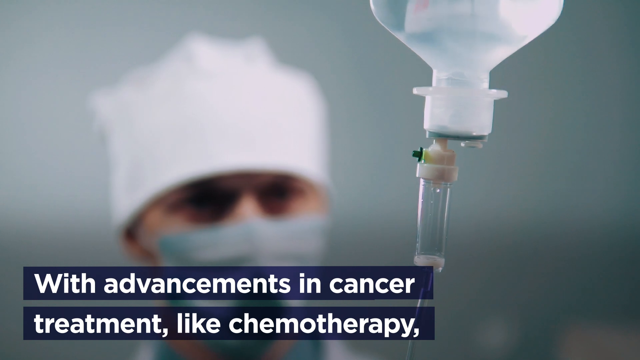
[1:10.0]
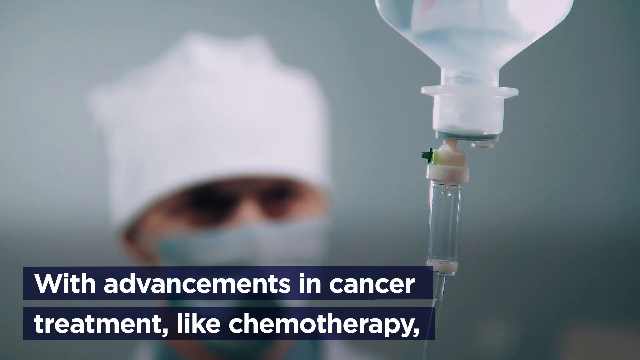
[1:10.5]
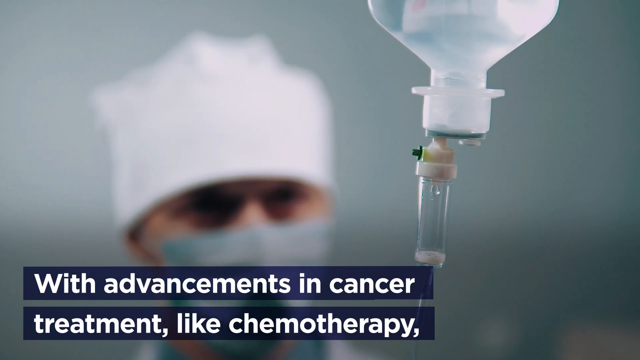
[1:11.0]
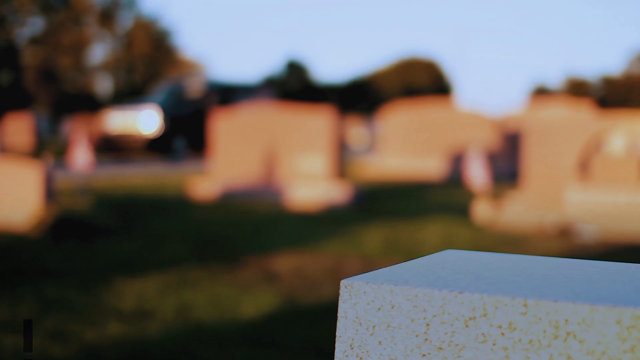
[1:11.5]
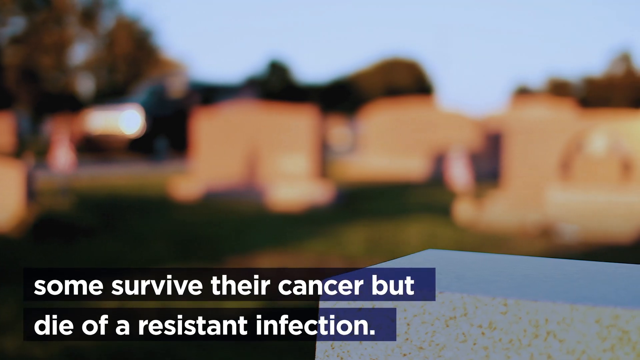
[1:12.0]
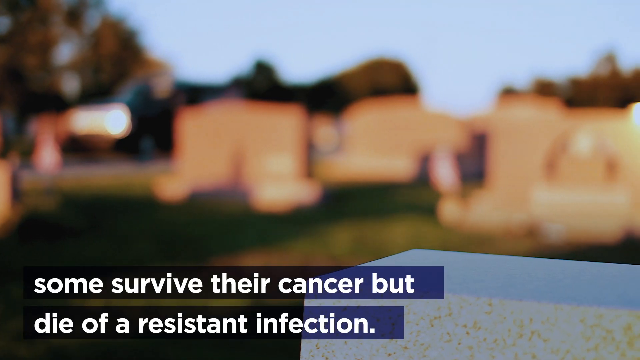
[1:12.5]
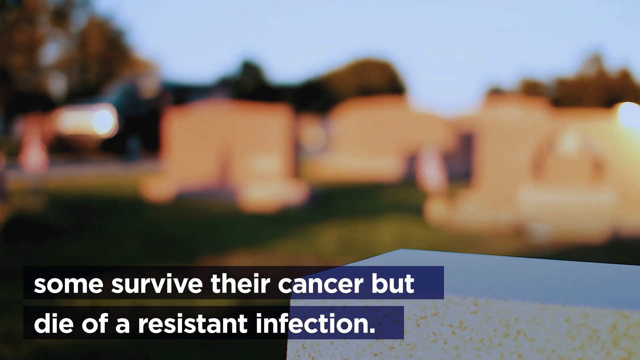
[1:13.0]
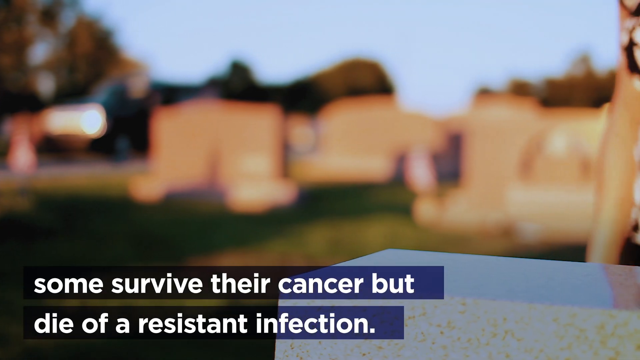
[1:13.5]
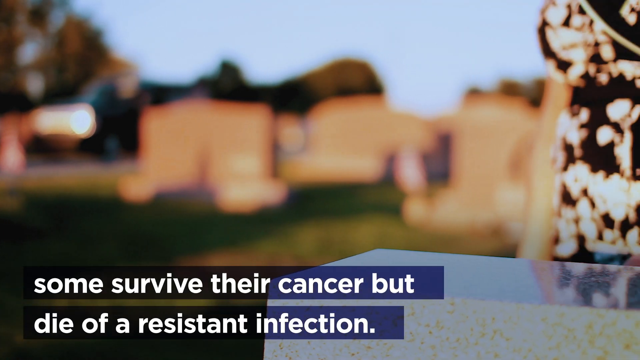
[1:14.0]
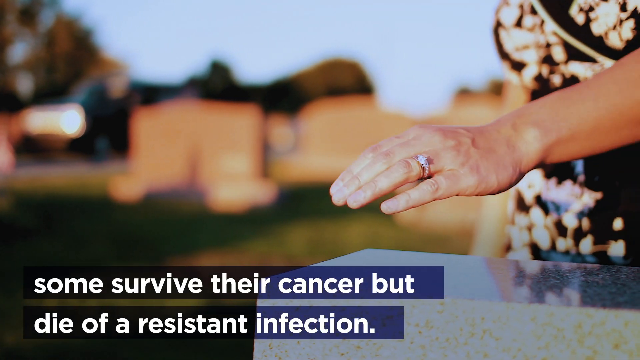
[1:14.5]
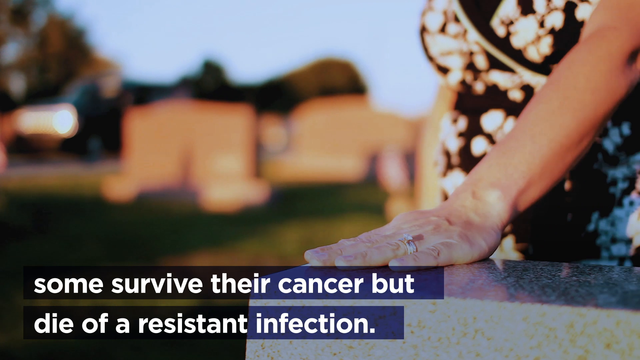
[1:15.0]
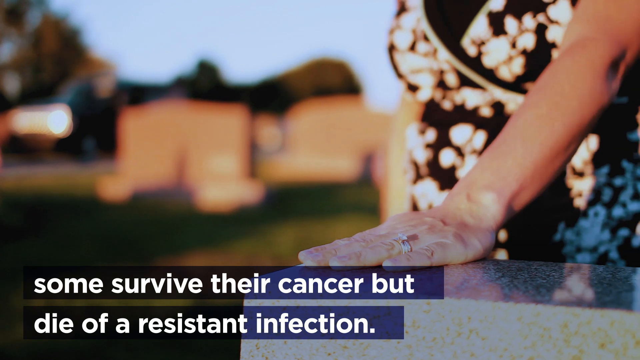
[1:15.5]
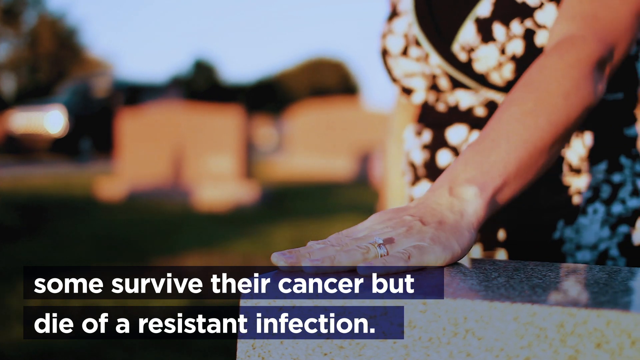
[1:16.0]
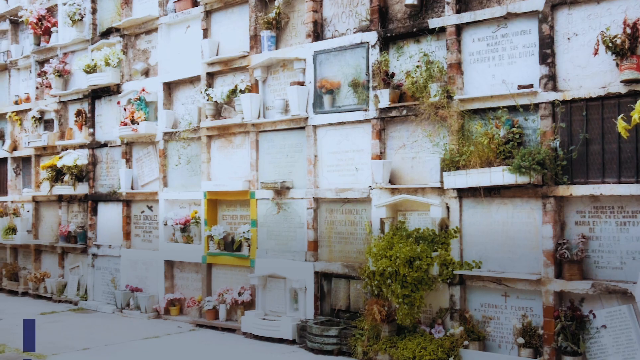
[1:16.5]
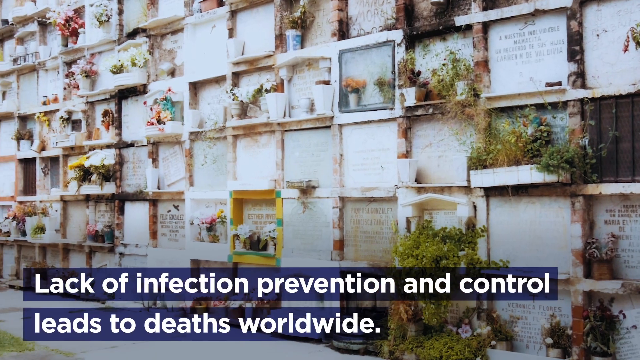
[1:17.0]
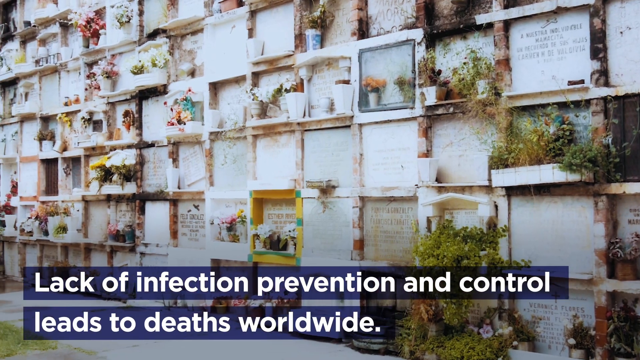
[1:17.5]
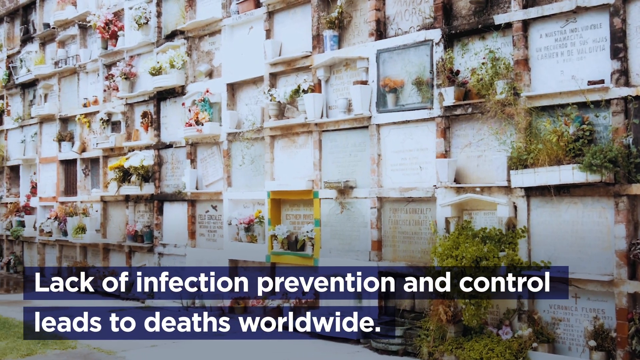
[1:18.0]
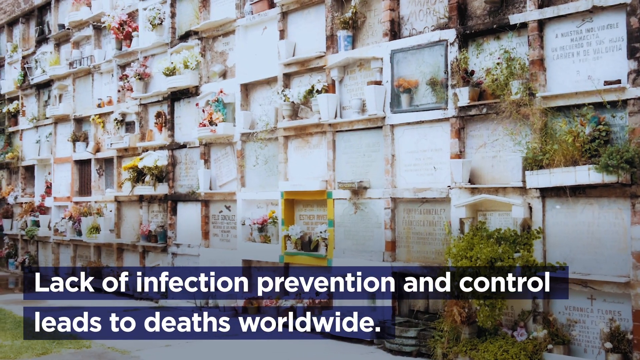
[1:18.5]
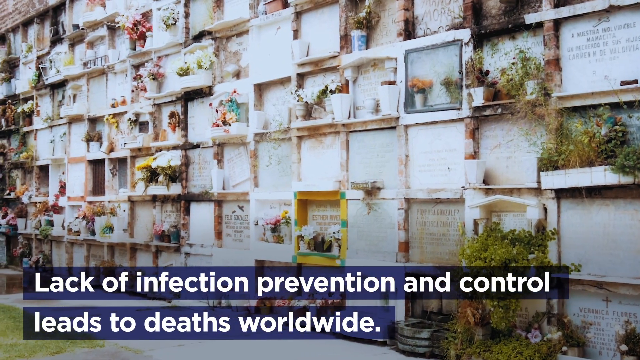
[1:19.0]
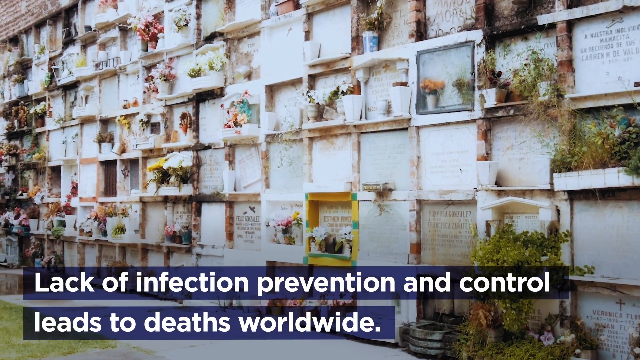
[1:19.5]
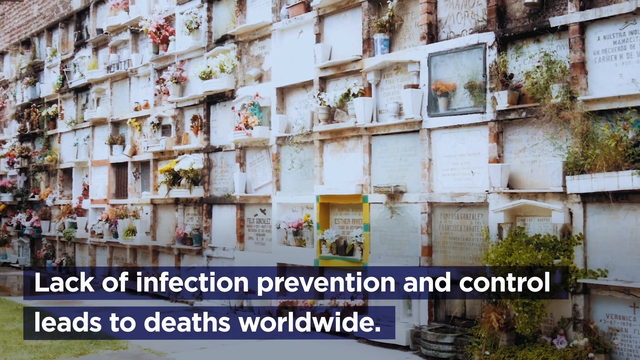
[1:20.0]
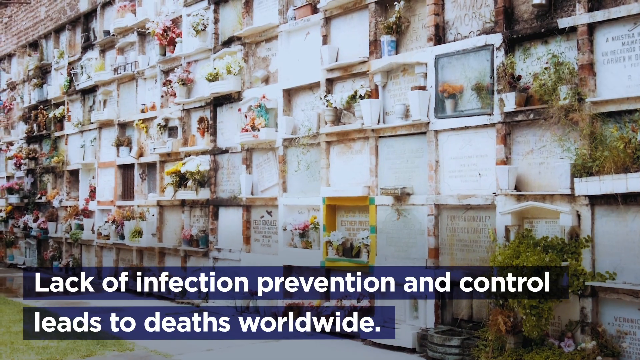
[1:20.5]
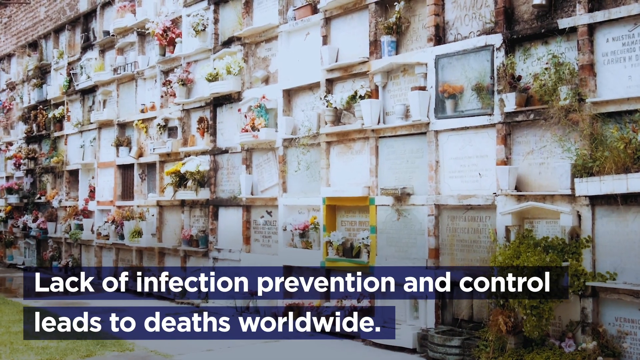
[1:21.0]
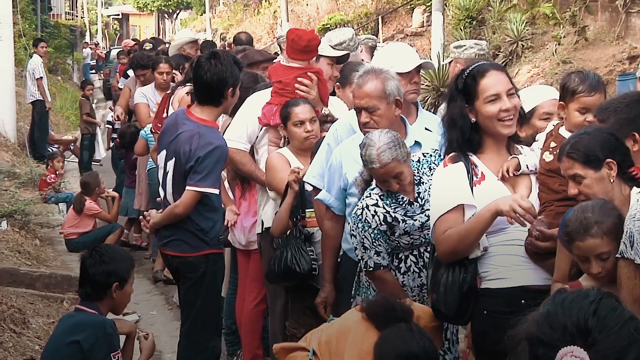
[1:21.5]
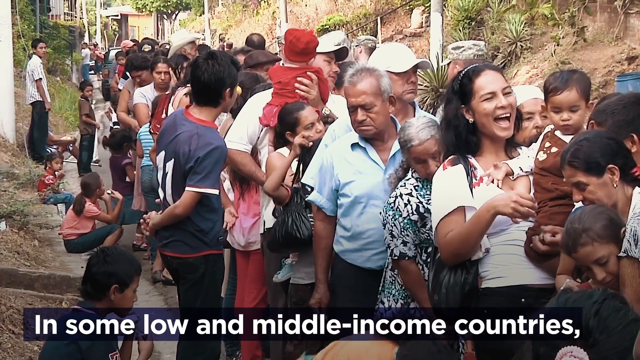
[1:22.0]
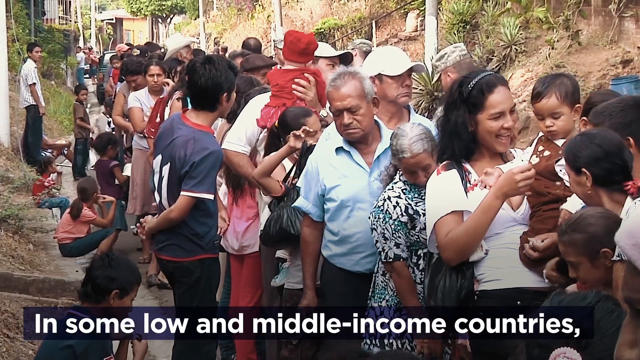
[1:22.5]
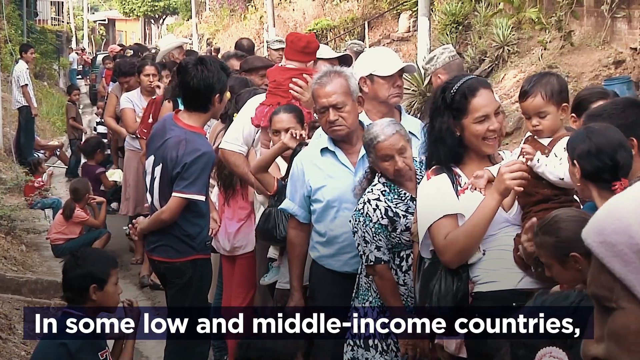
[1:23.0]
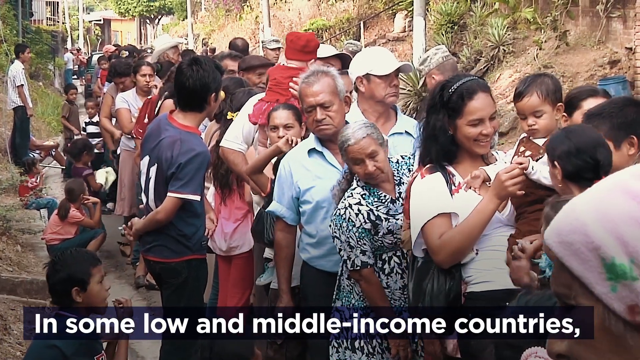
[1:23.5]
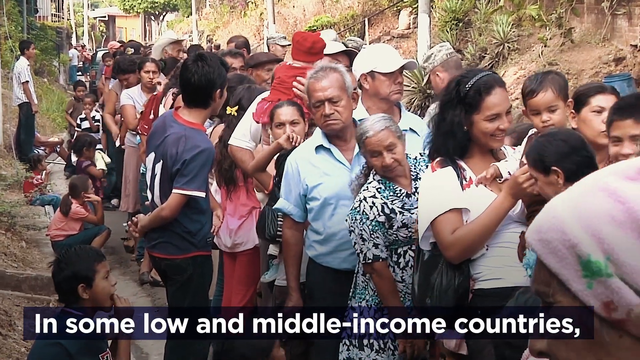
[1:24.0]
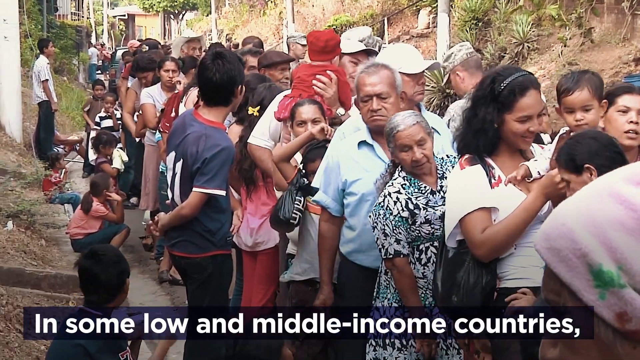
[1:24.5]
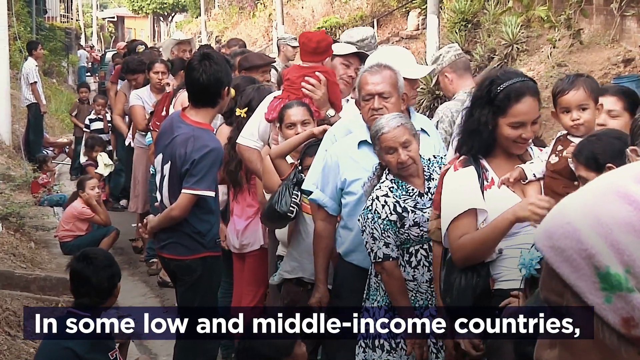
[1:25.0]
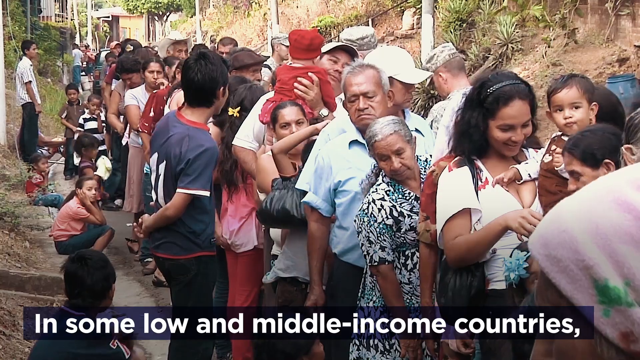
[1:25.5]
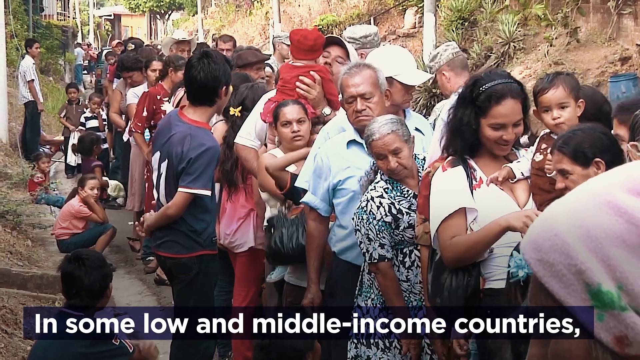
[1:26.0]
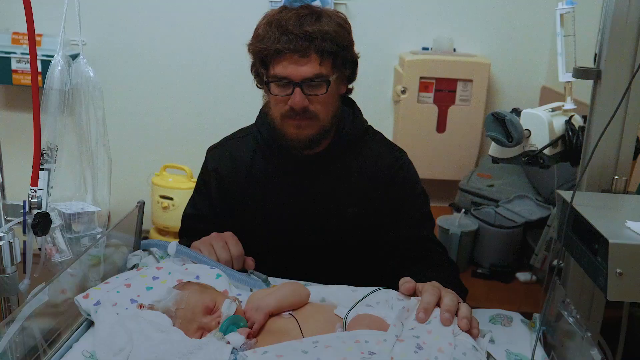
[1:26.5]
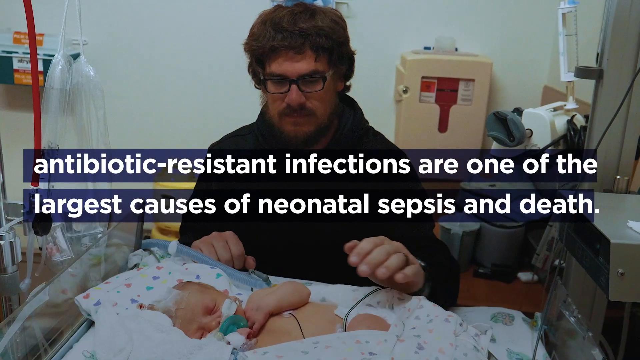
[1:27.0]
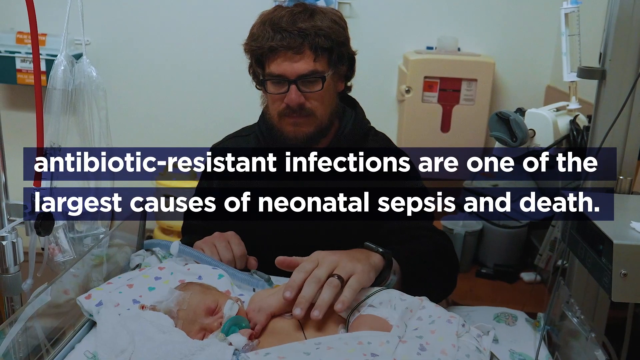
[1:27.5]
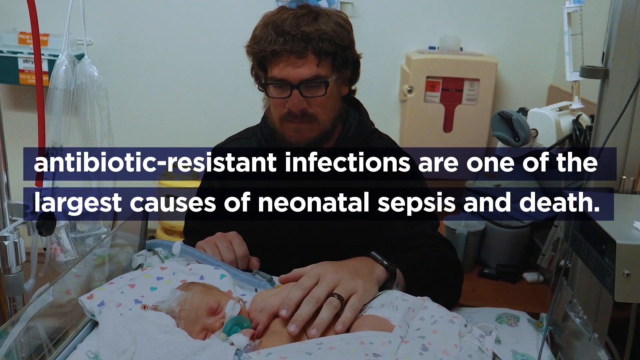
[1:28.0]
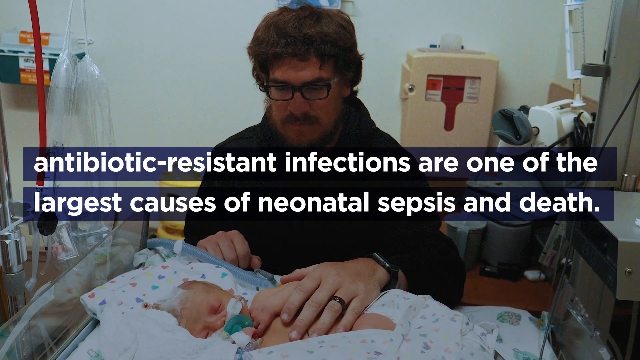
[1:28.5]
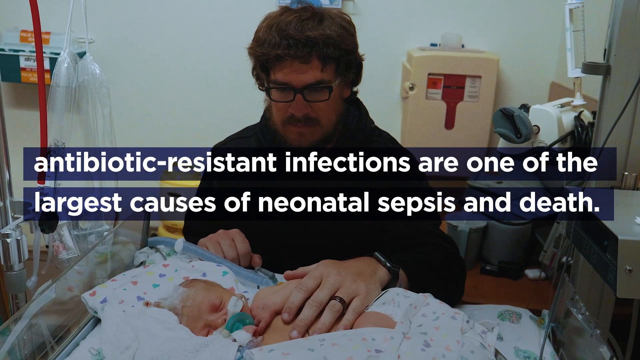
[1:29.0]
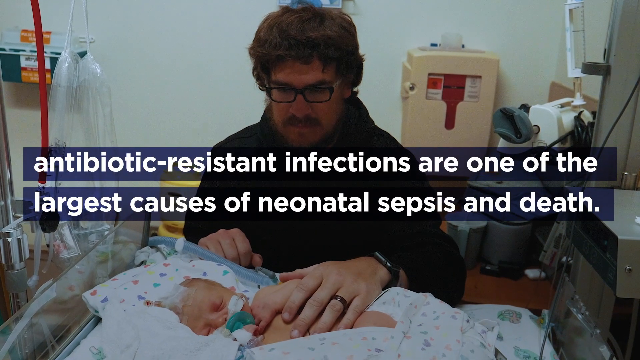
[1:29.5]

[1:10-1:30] At the start, white words at the bottom of the screen refer to surviving cancer while everything else is blurred. The scene moves to a white wall that looks like a place where people are buried in vaults in the wall rather than in the ground; each small area is squared off, and flowers are in the different areas for each individual person. Then a group of brown-skinned people stands on a road: older people with gray hair and younger people holding babies, some dressed in white, some wearing caps, and a little baby dressed in red with a red hat. Next comes what looks to be a hospital room where a baby lies in a bed. A man who looks white, wearing black-rimmed glasses and a wedding ring, stands beside the baby and looks about to touch it, presumably his child. Text across the screen reads "antibiotic resistant infections are one of the largest causes of neonatal sepsis and death."